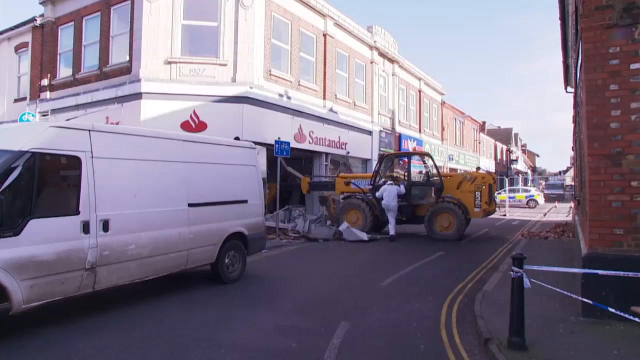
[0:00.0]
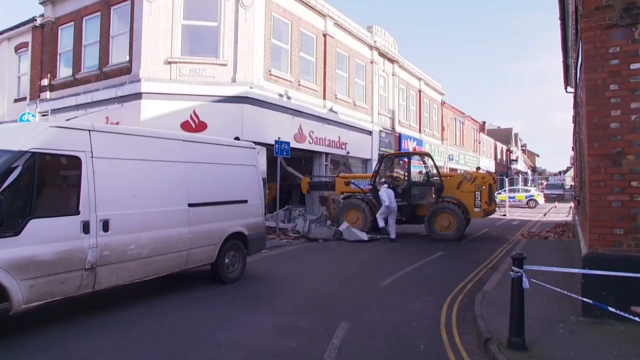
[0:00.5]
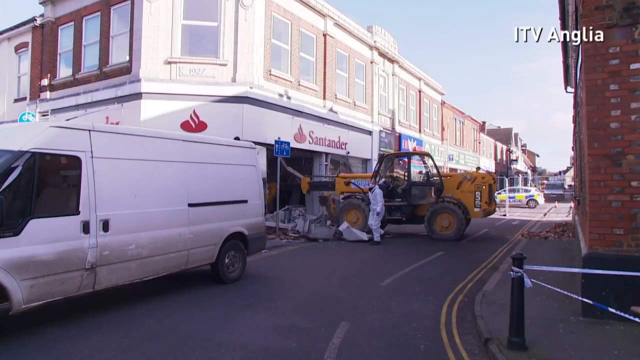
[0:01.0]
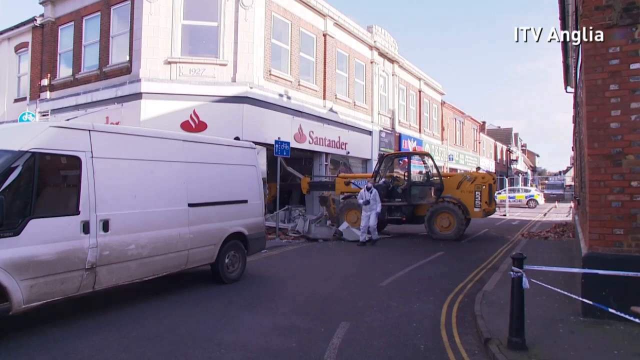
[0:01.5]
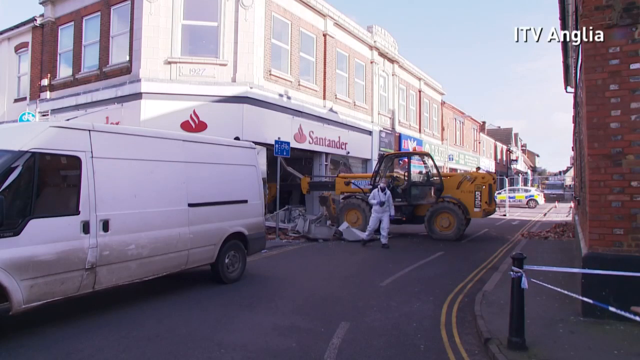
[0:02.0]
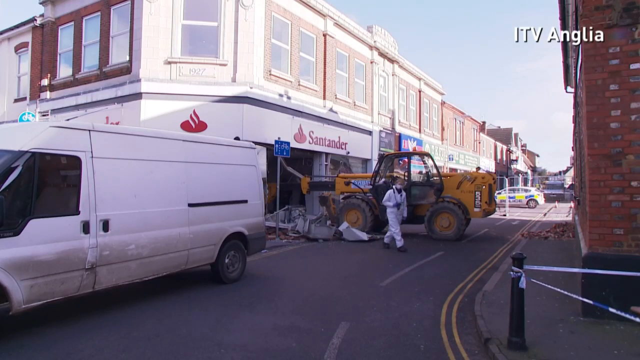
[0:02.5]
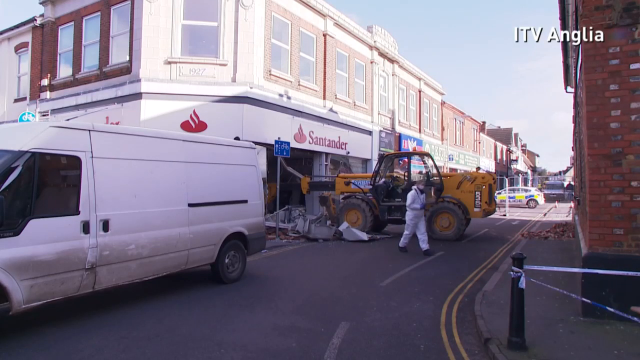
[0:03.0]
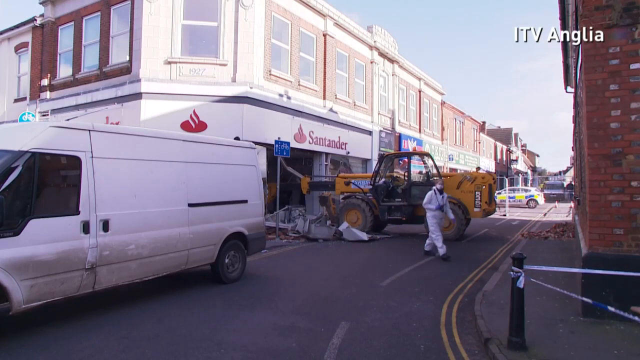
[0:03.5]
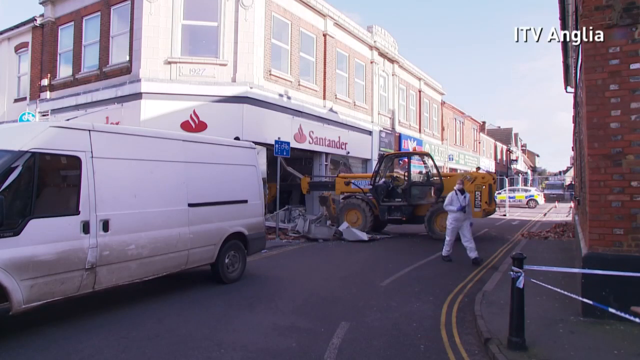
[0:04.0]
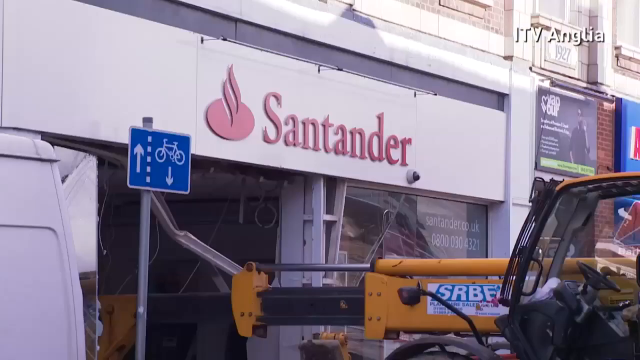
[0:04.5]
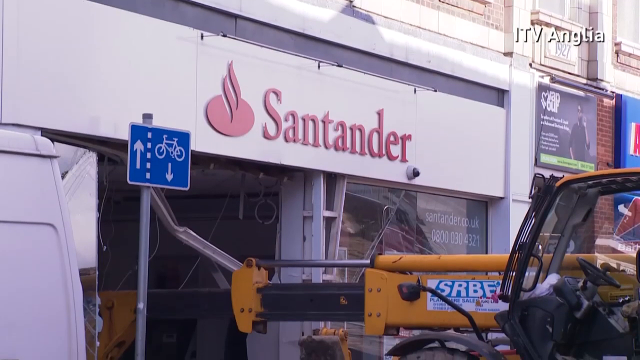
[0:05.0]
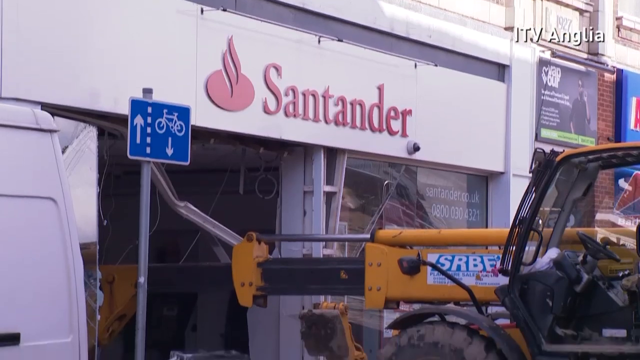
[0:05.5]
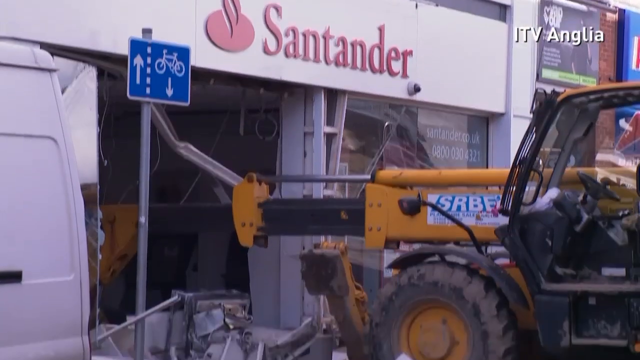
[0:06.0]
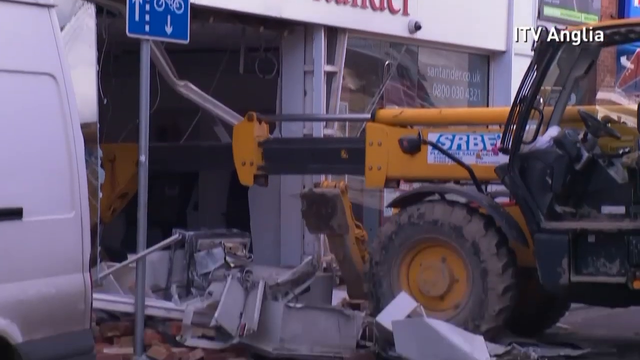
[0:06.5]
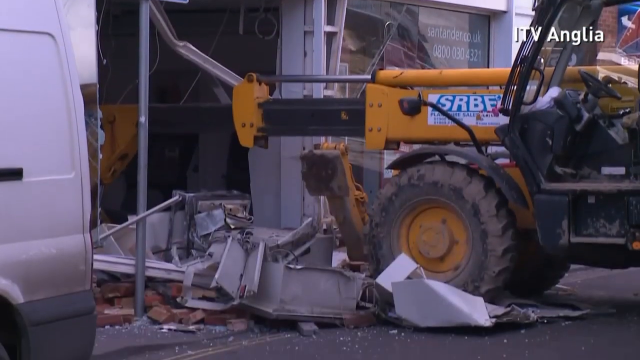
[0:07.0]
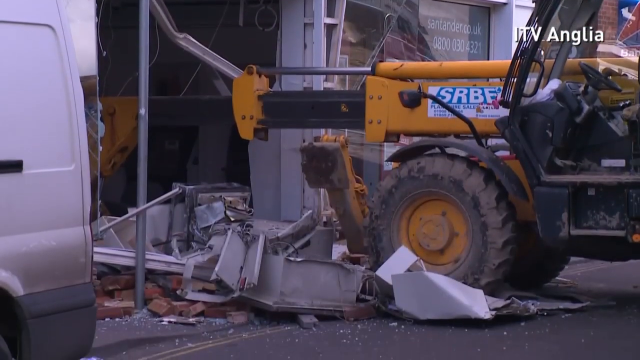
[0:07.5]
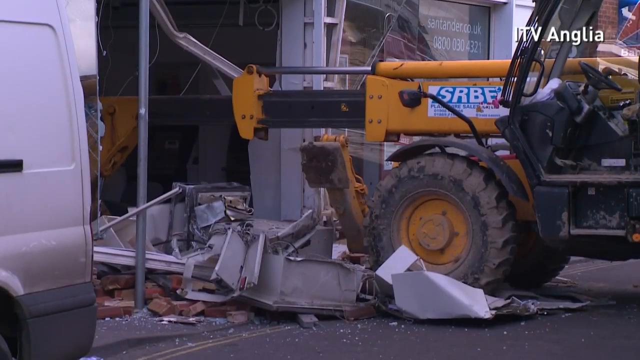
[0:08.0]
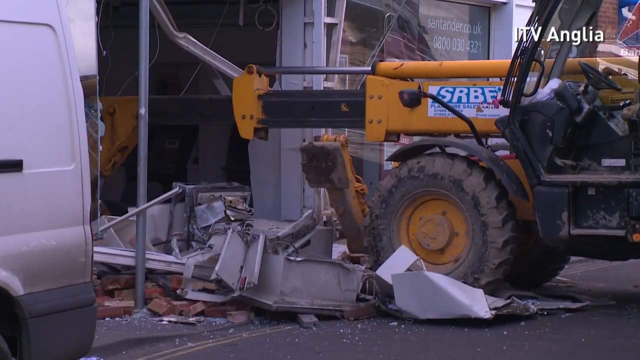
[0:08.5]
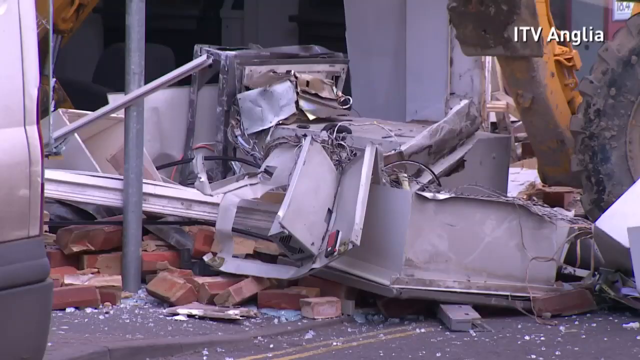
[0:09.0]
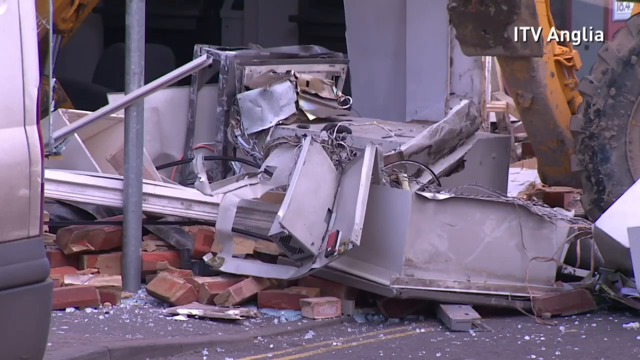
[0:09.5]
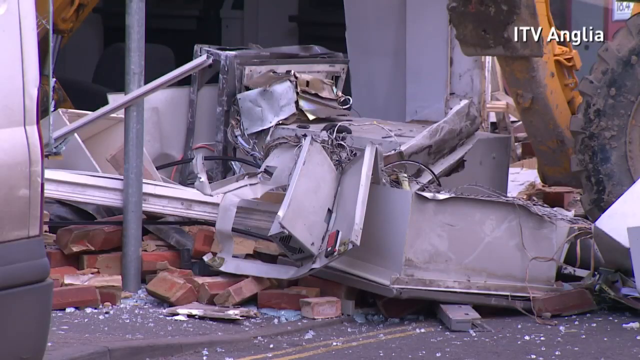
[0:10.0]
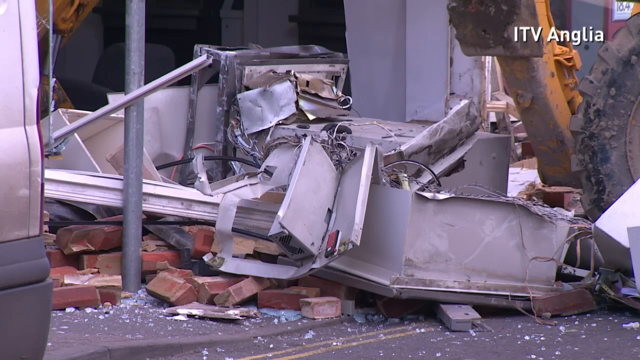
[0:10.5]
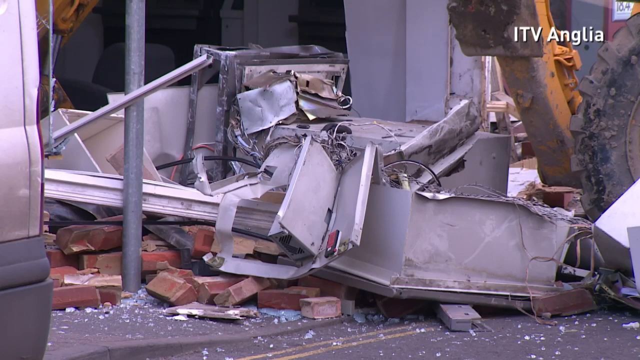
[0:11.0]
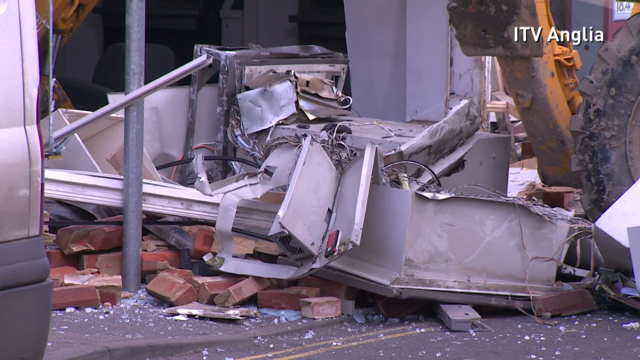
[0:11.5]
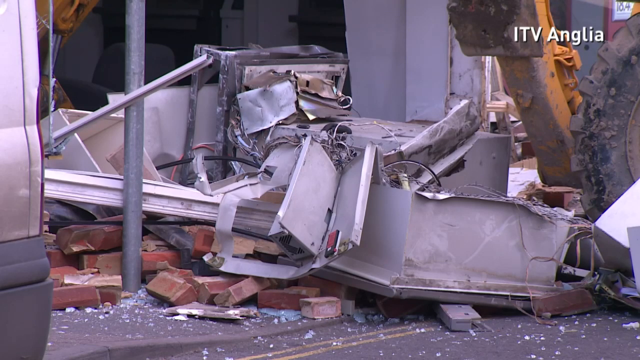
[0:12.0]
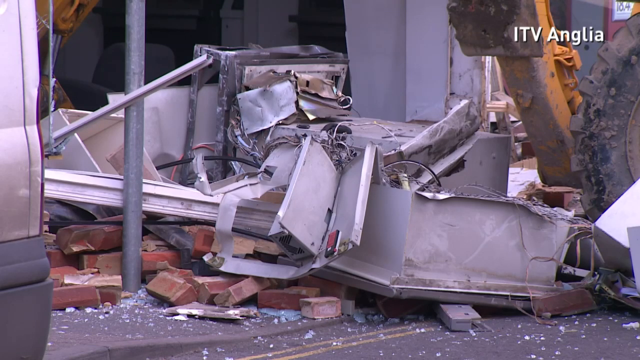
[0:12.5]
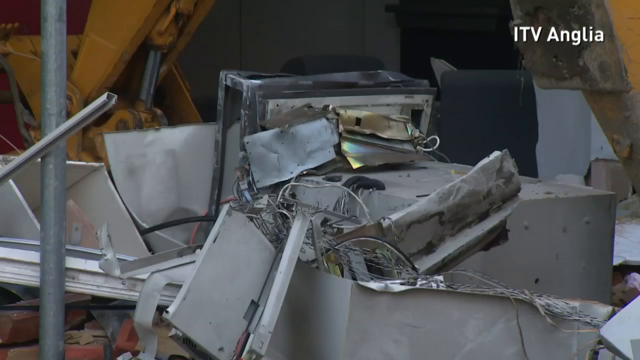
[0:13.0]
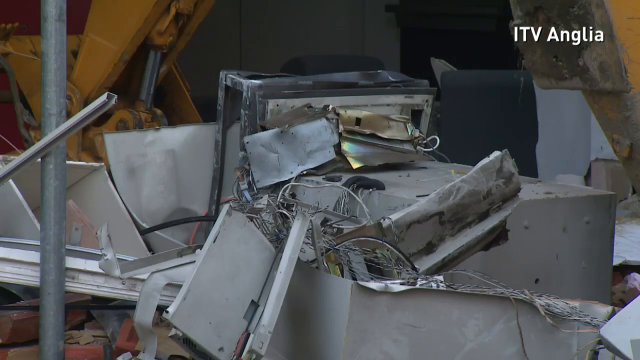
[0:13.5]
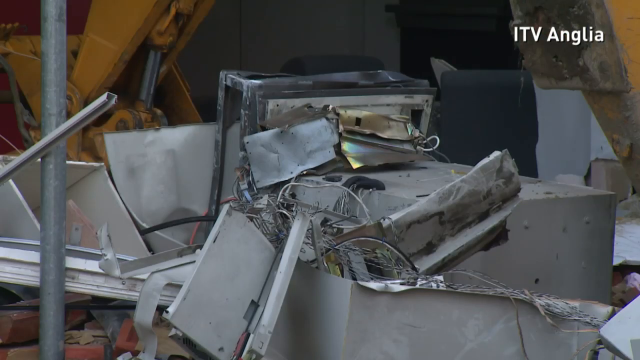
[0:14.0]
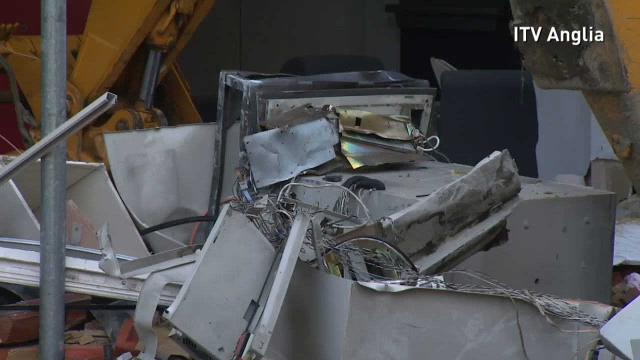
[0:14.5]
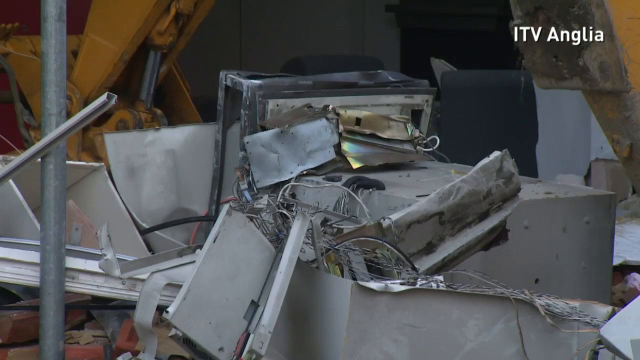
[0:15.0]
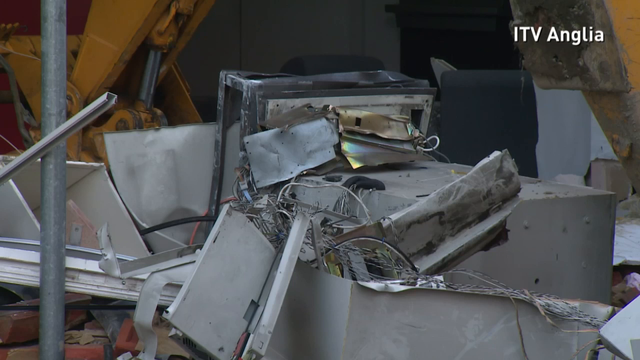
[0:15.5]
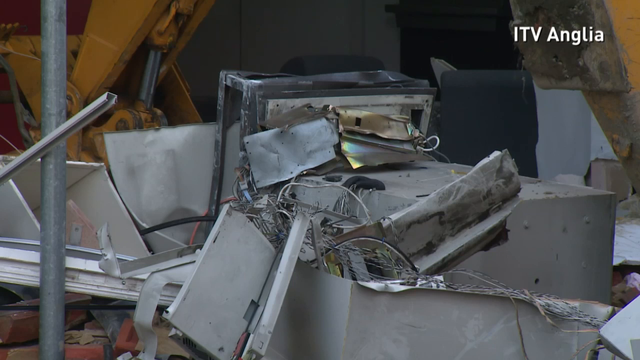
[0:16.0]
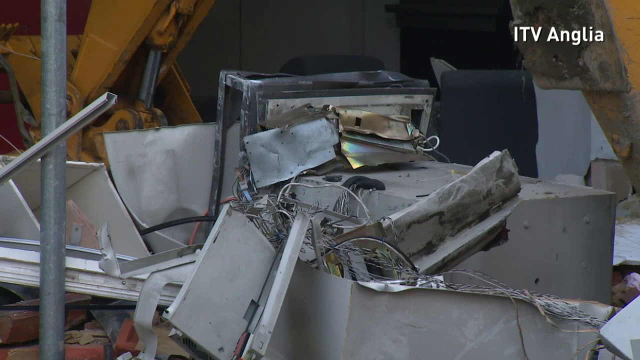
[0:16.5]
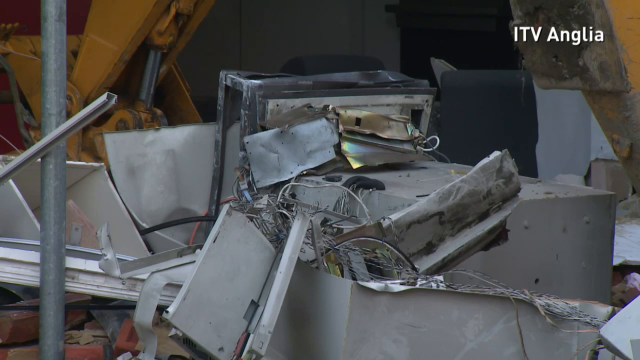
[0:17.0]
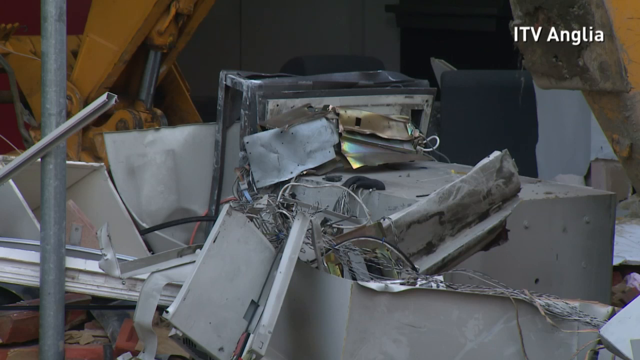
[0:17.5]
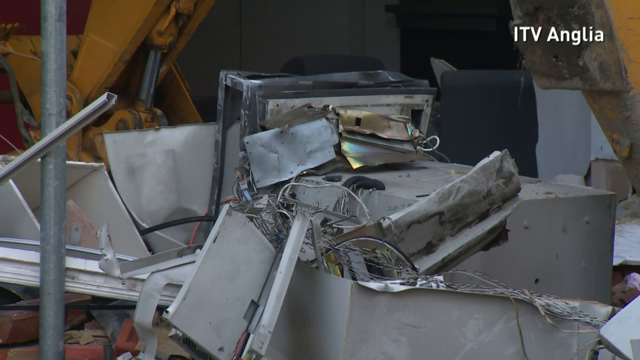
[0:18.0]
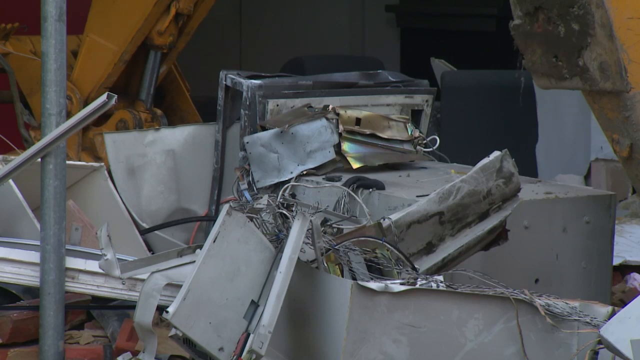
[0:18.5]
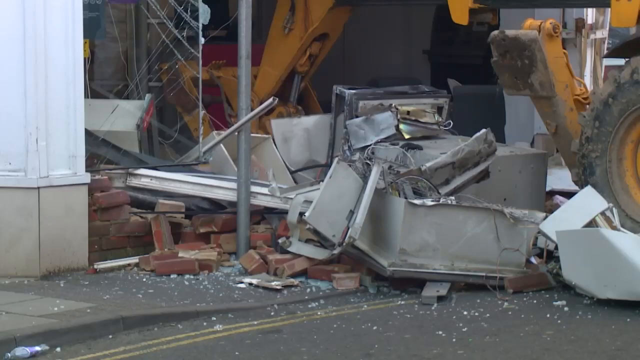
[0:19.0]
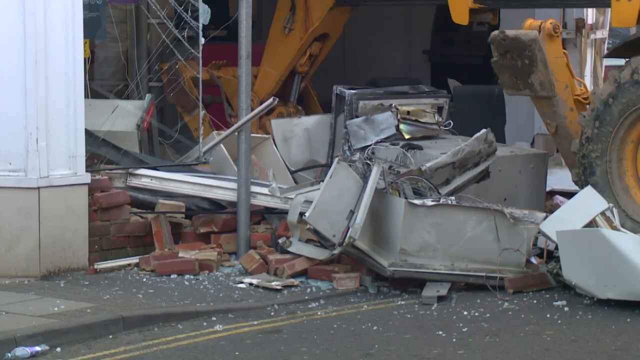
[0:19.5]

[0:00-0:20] A street between buildings is shown. On the left there is a white van, and in the middle there is a yellow tractor, a big machine of the kind used on a building site. The machine appears to have driven into the front of a building on a corner, a corner stall. On the white part still attached to the building, the name "Santander" is written in red. A person dressed in white has just climbed out of the yellow vehicle. A close-up of the damage follows. The front of the tractor-like vehicle has an extension with nothing big attached to it; it seems to be an arm folded onto the vehicle. The camera slowly pans from higher up down to ground level, where debris from the building is lying on the ground, and zooms in to the debris, which includes reddish bricks and a lot of metal parts.